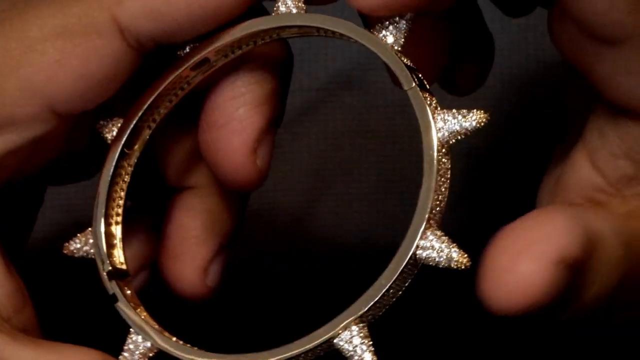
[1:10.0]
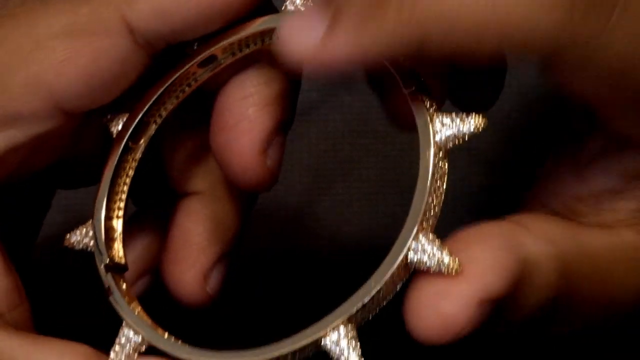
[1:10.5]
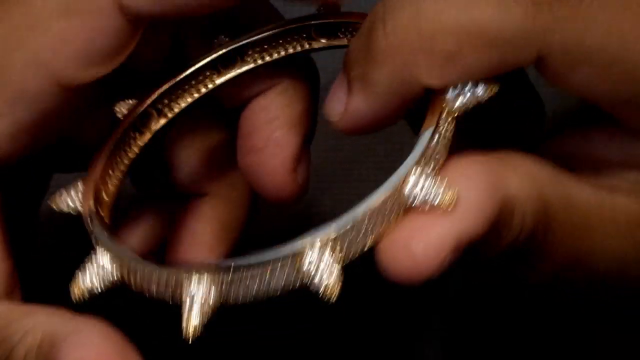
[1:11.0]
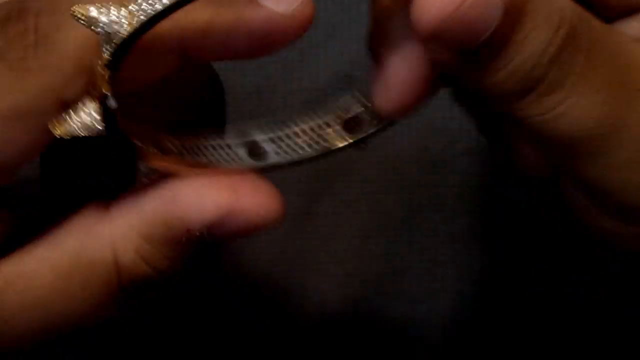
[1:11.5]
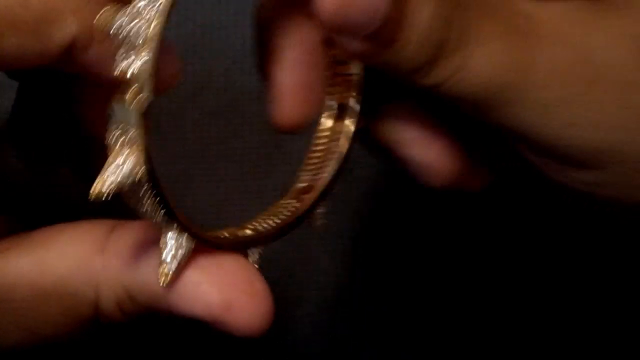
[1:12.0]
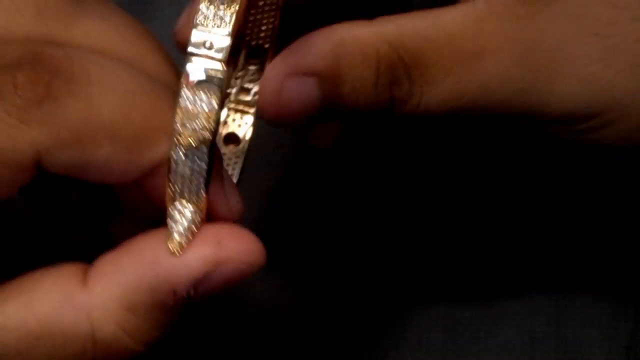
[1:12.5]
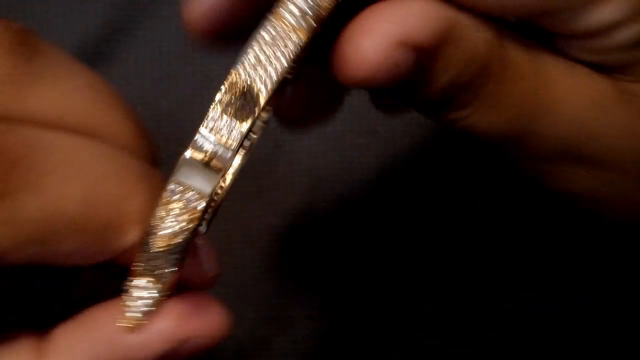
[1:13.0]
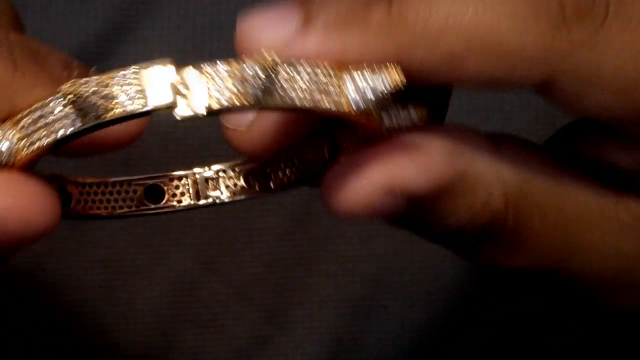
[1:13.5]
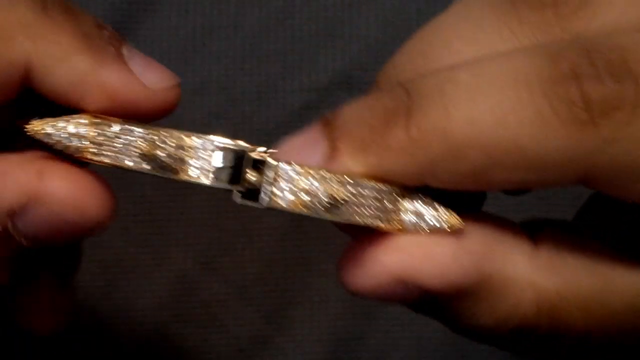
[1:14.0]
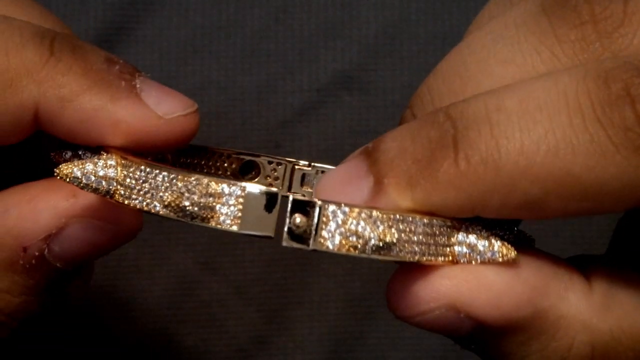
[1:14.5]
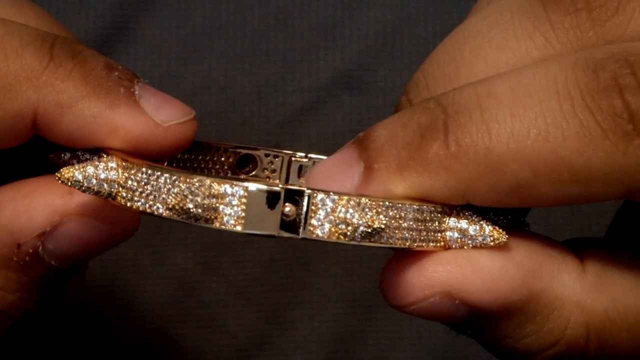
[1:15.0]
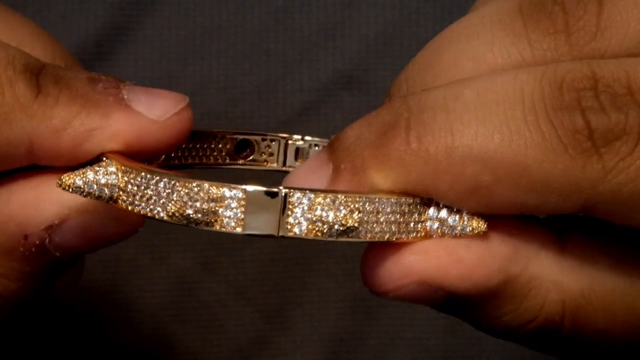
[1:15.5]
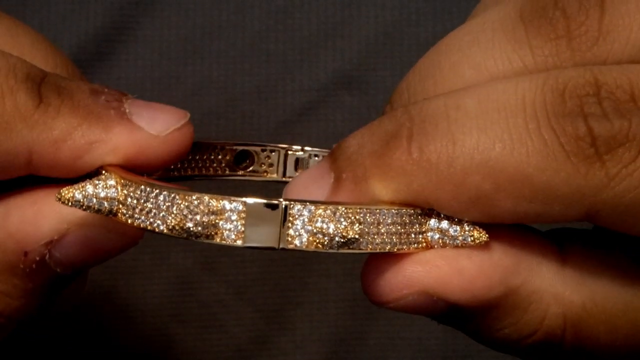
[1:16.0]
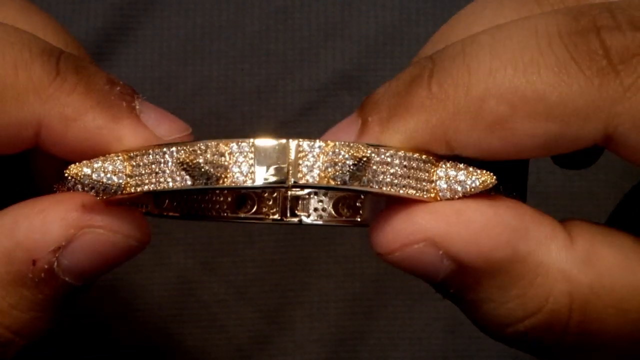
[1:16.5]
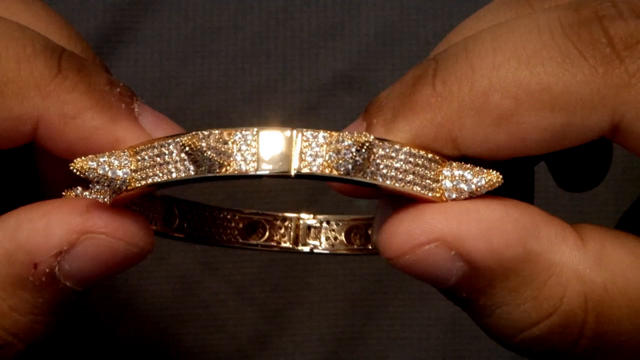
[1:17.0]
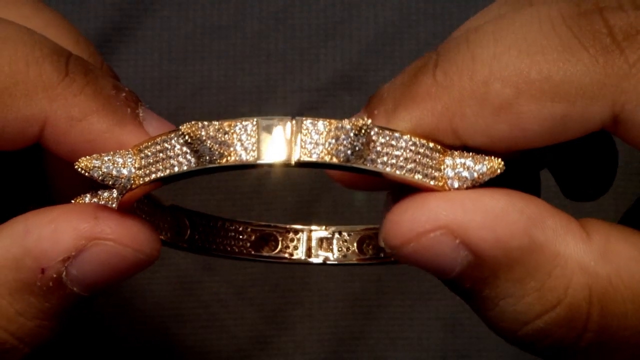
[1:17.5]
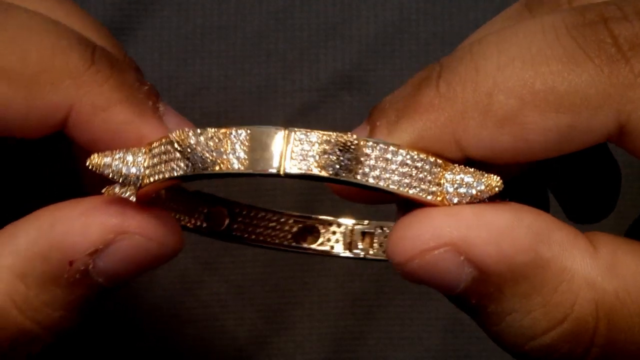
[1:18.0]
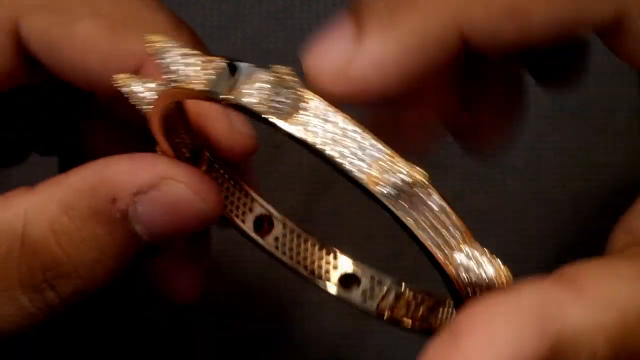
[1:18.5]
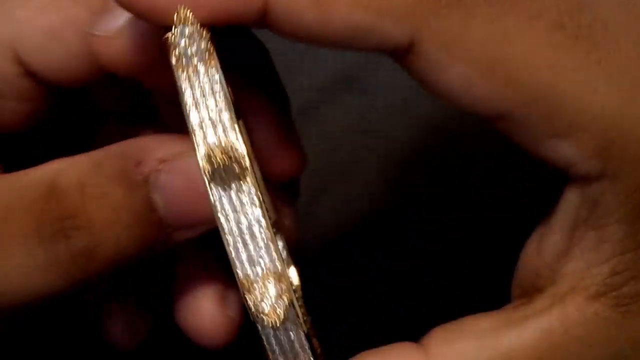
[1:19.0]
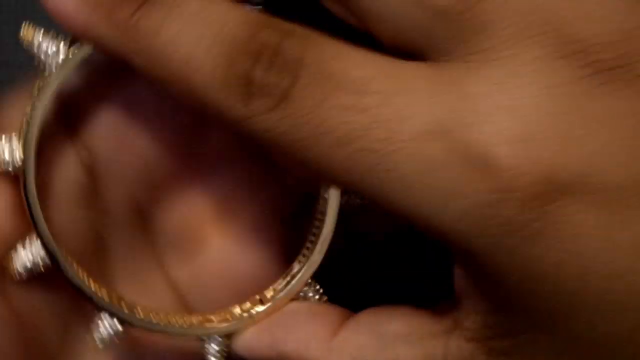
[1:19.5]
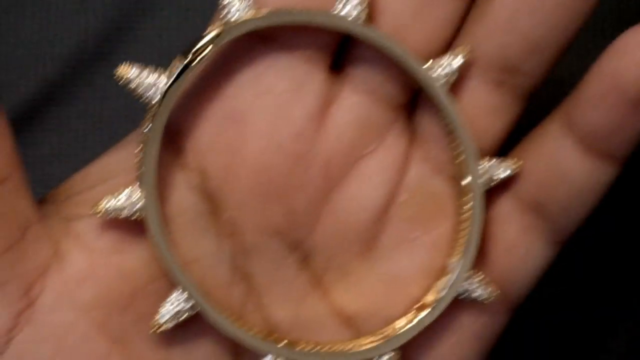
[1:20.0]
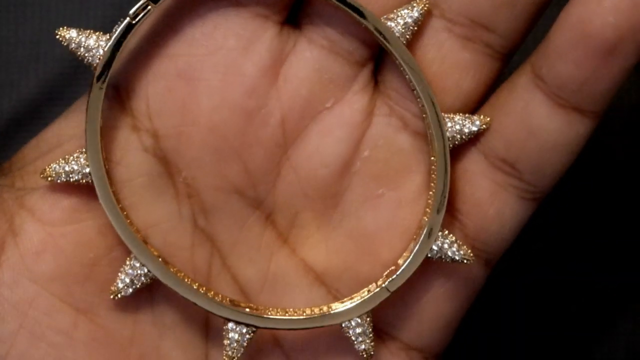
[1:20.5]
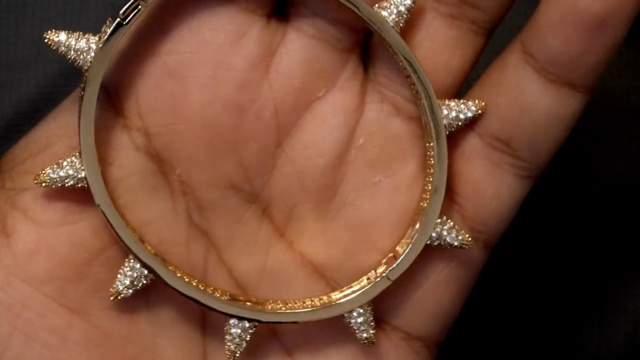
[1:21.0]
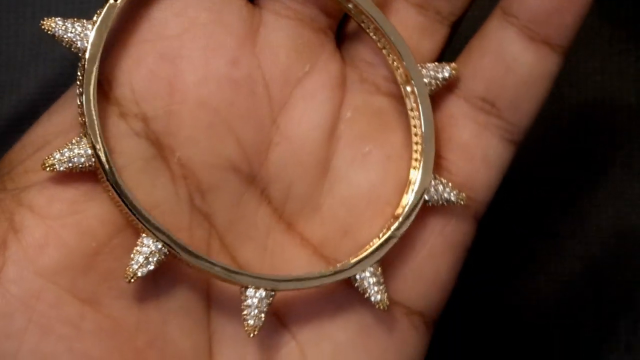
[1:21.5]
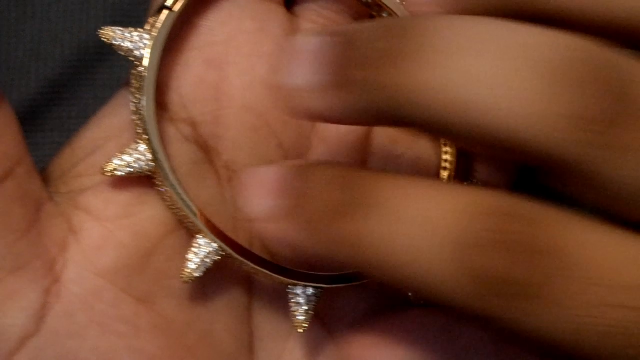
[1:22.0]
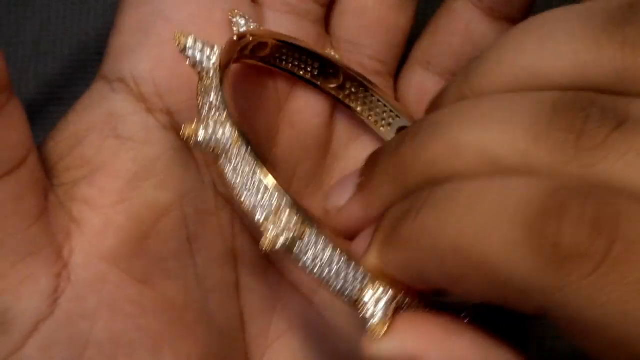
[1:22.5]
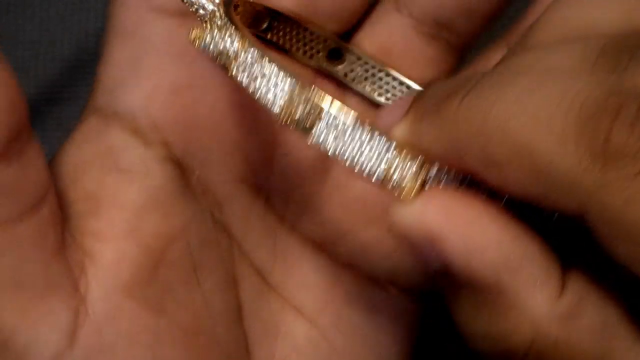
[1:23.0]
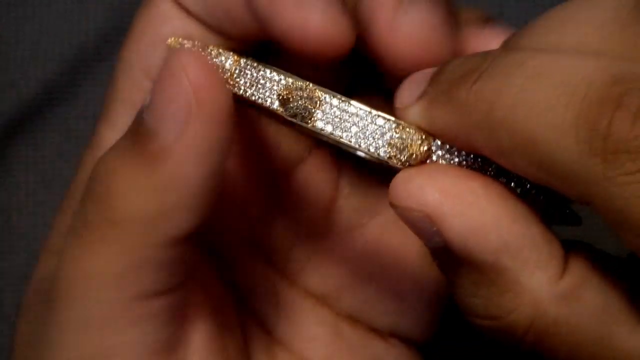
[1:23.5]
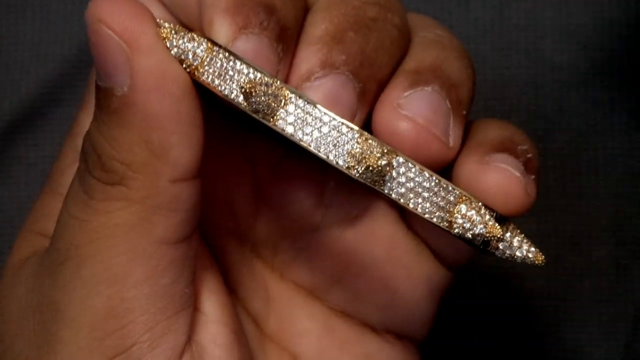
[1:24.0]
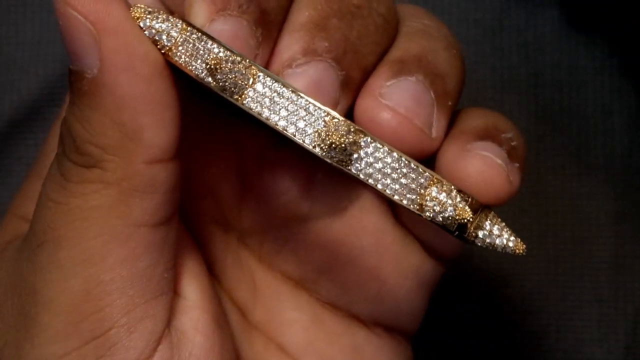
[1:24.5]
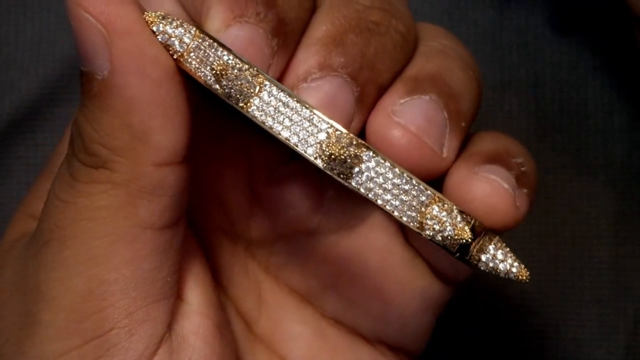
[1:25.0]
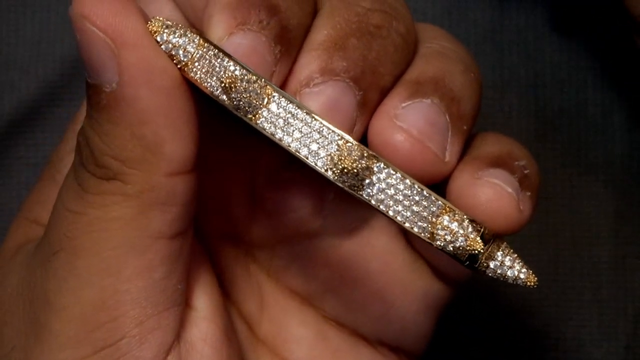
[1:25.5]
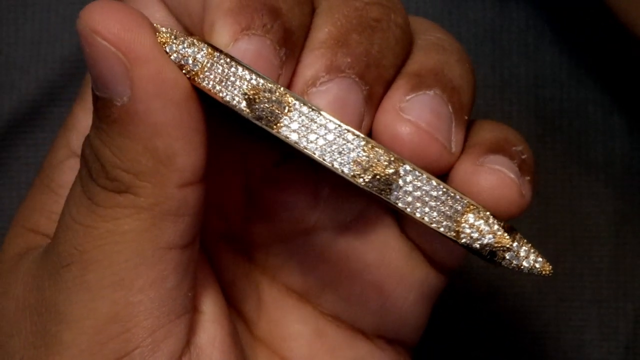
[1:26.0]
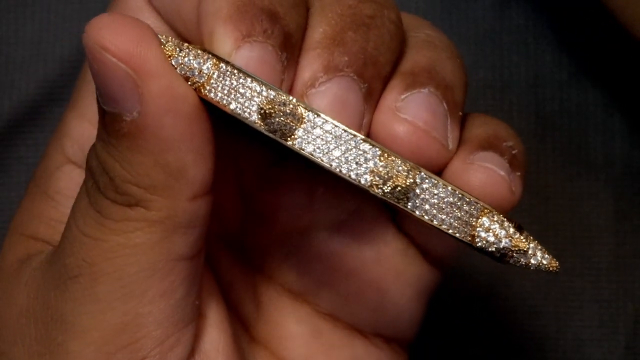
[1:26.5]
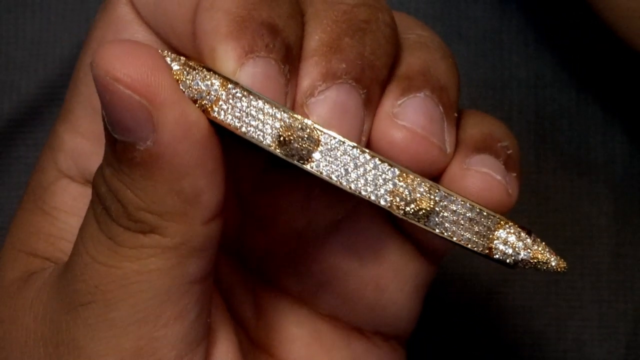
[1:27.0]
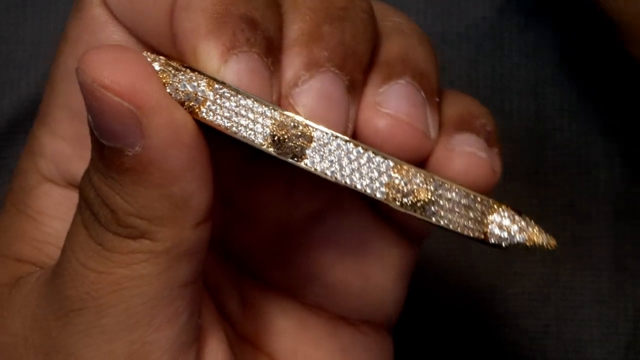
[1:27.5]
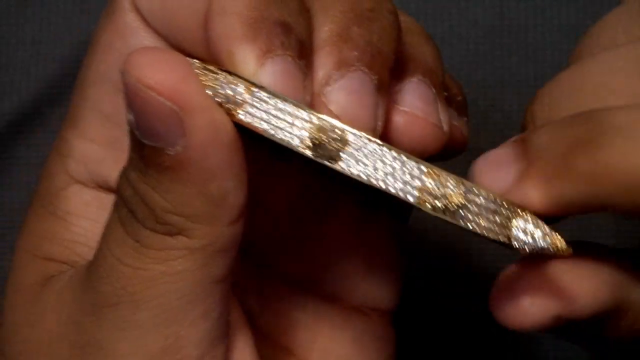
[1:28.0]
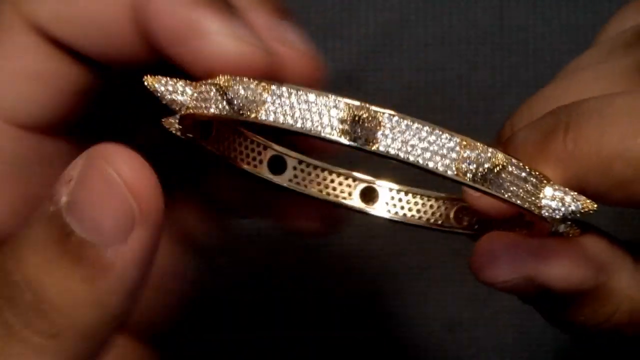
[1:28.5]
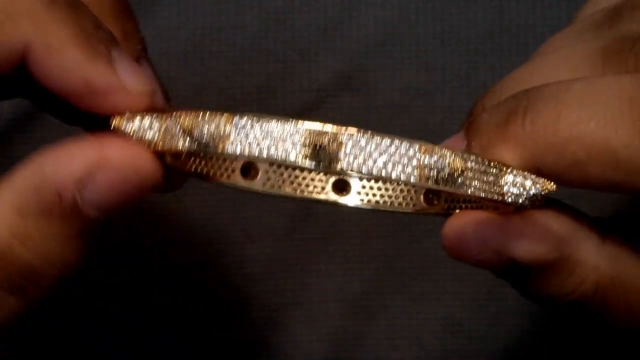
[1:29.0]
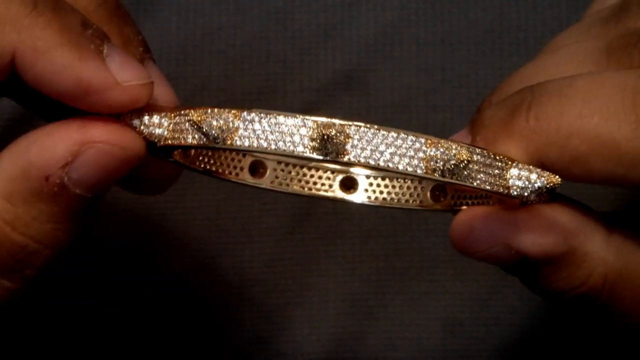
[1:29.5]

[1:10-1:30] He opens the bangle. When it is closed, the place where it opens looks the same as the rest of it, with no visible way to open it. There is a little magnet that keeps it closed tight. The hand keeps showing the bangle, and it shines.